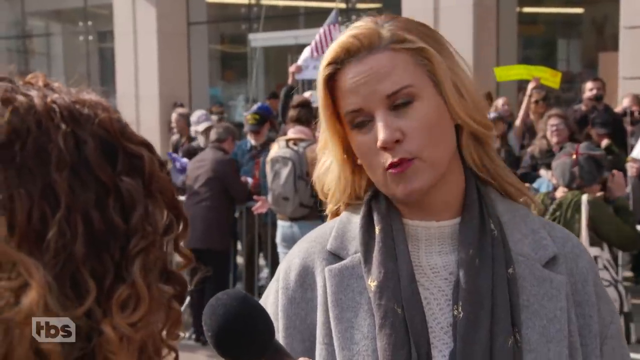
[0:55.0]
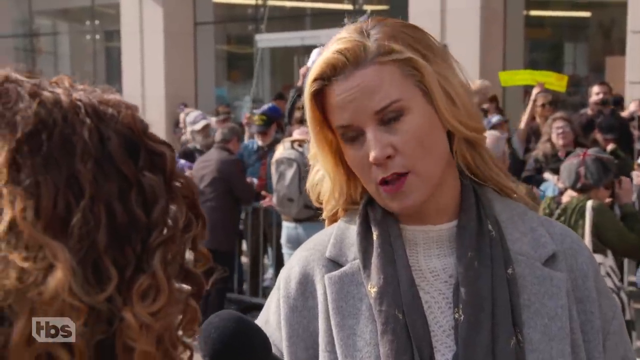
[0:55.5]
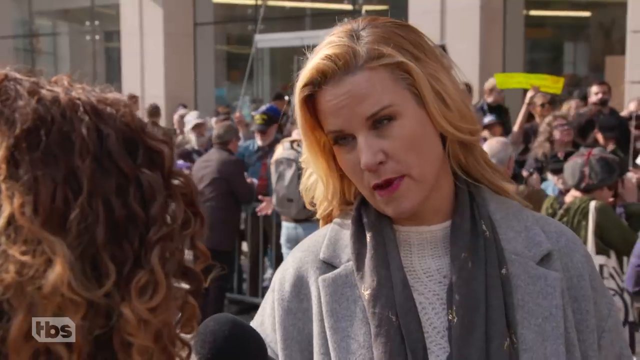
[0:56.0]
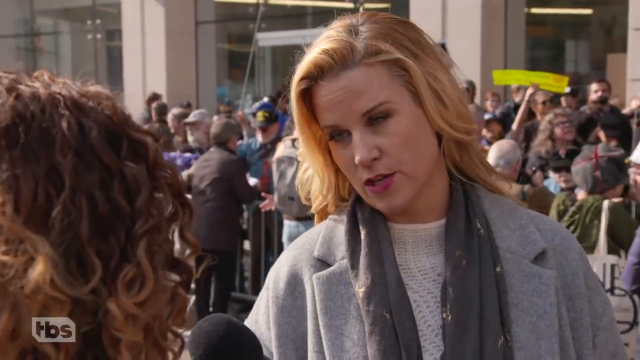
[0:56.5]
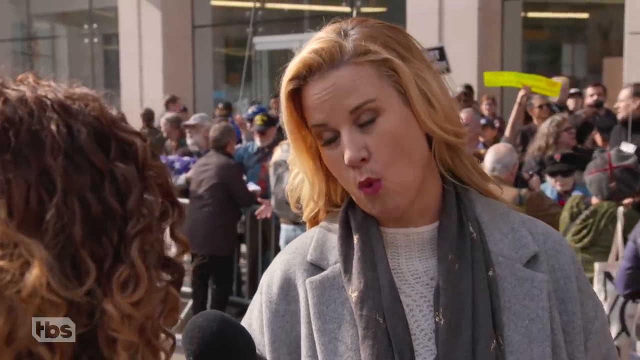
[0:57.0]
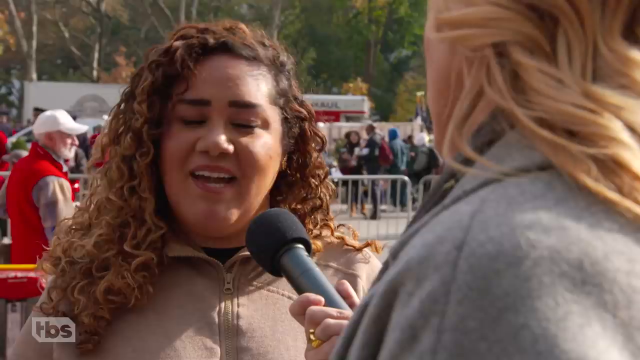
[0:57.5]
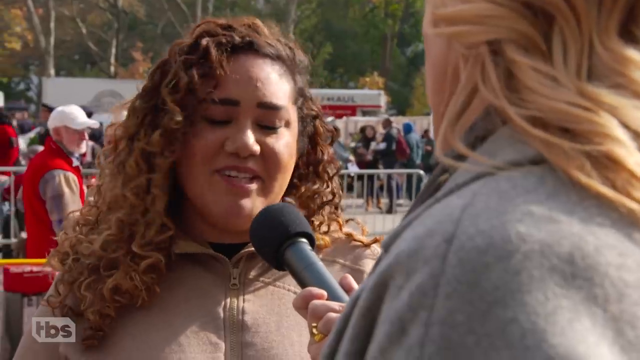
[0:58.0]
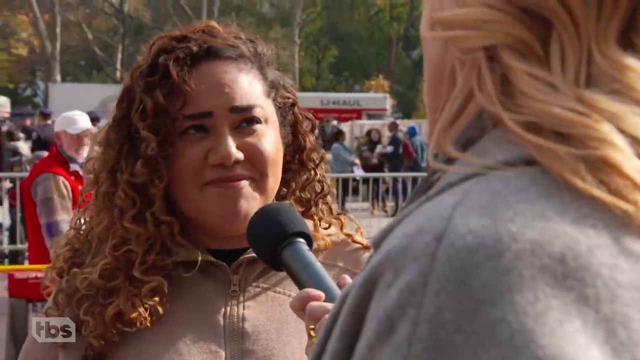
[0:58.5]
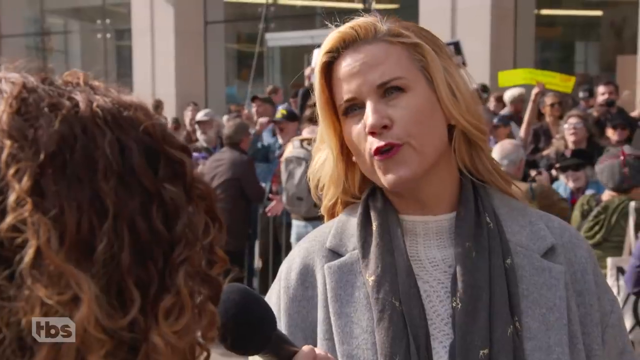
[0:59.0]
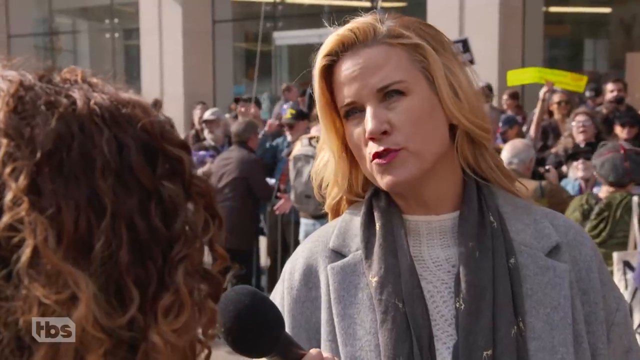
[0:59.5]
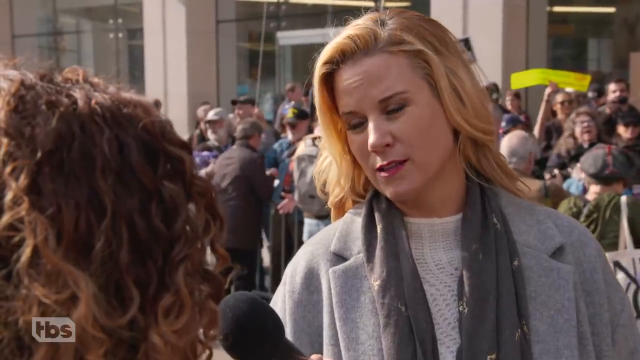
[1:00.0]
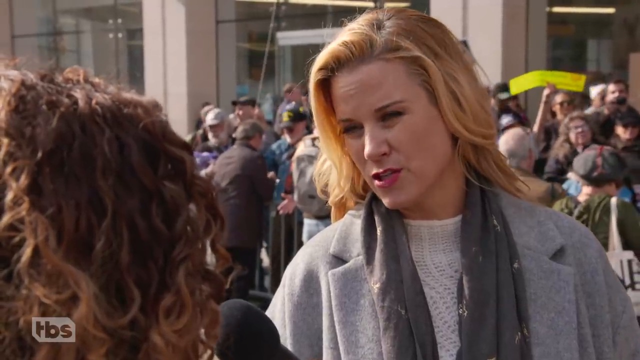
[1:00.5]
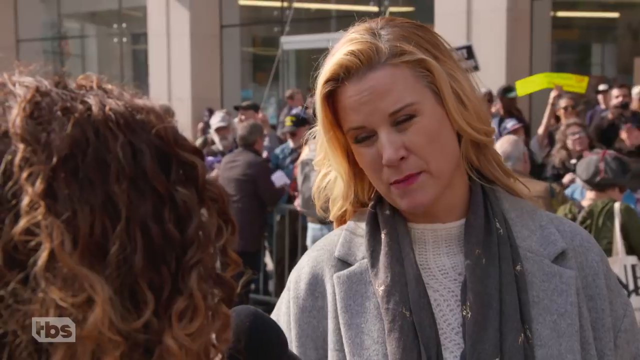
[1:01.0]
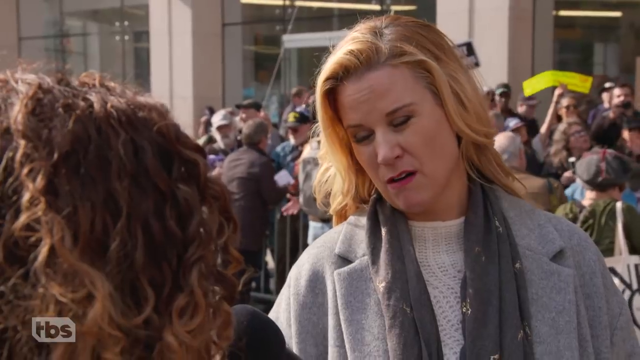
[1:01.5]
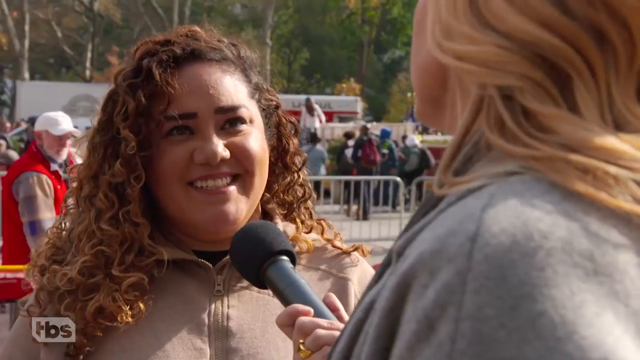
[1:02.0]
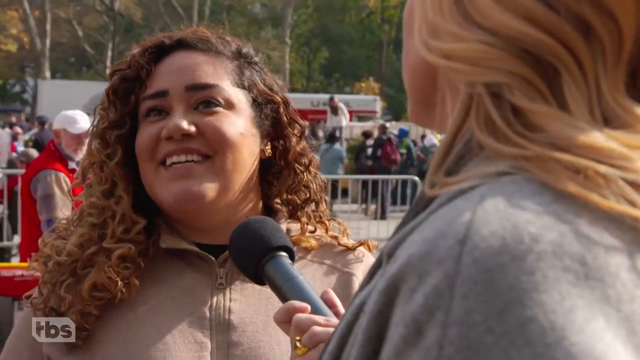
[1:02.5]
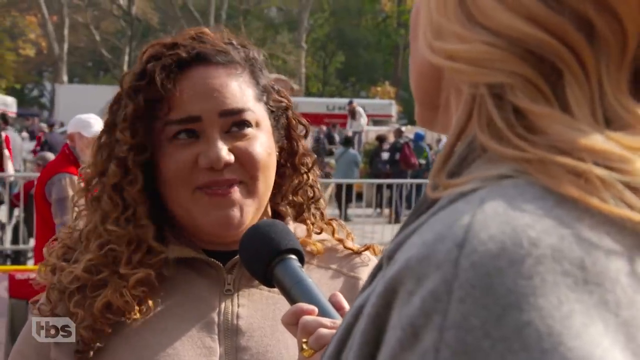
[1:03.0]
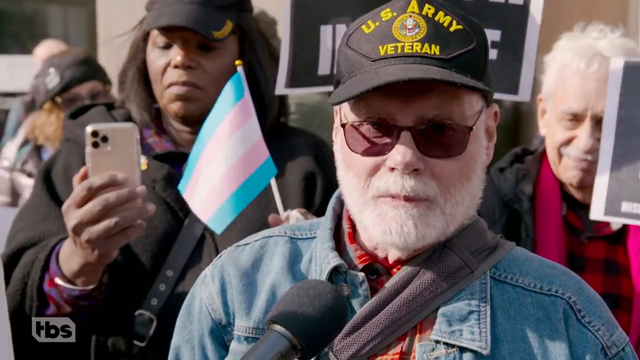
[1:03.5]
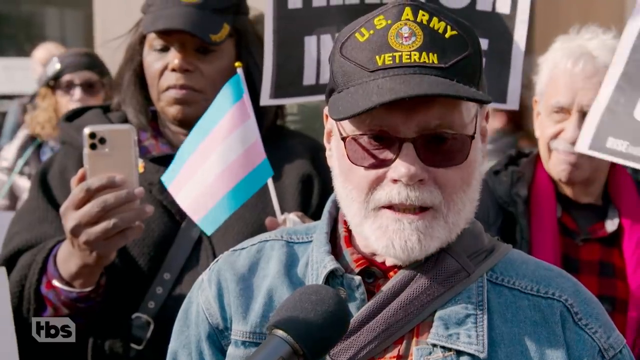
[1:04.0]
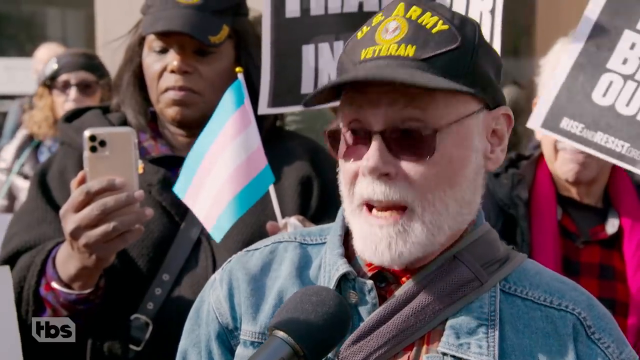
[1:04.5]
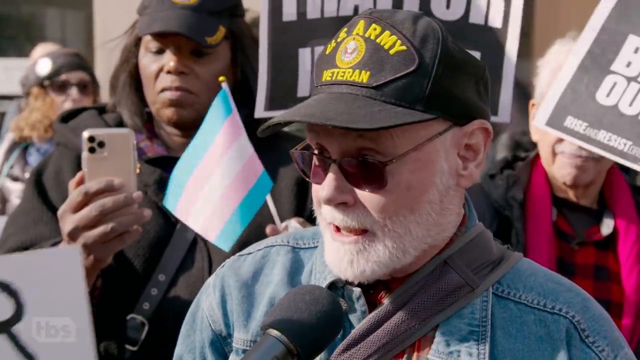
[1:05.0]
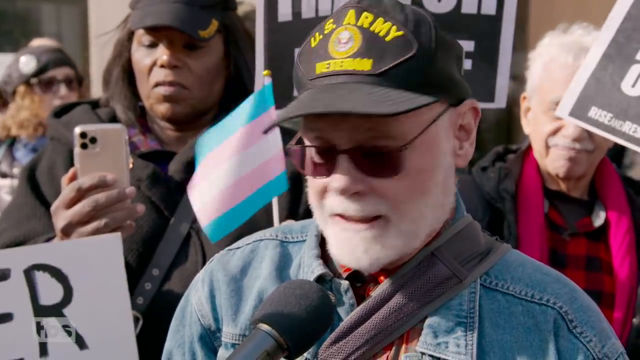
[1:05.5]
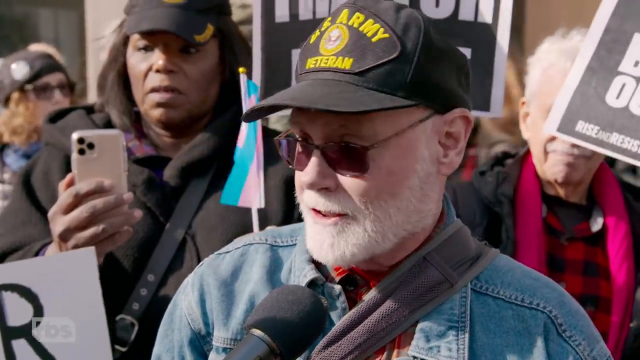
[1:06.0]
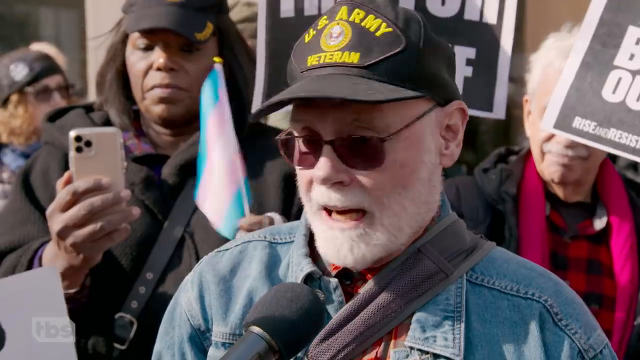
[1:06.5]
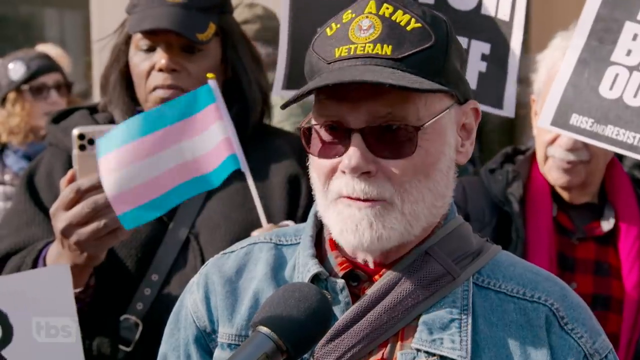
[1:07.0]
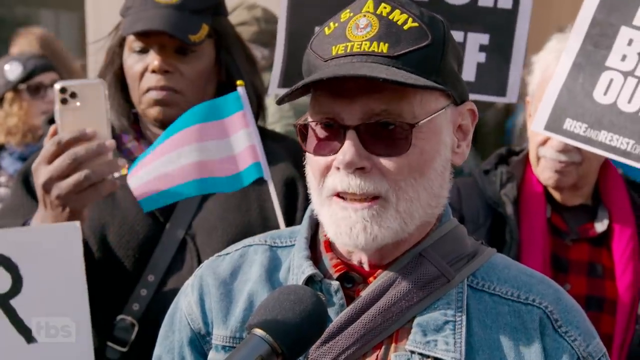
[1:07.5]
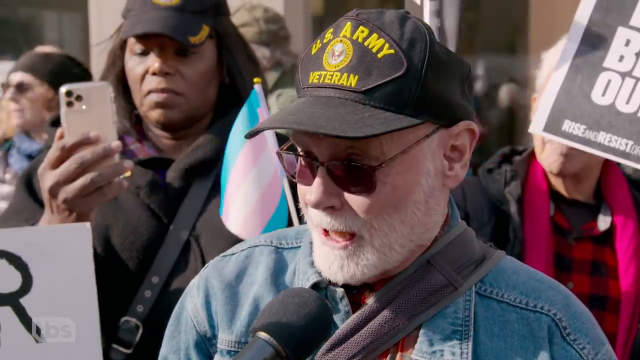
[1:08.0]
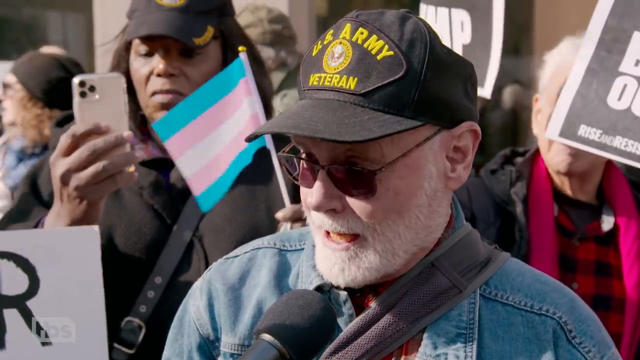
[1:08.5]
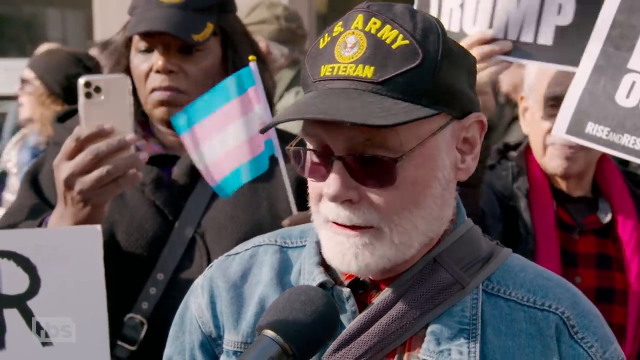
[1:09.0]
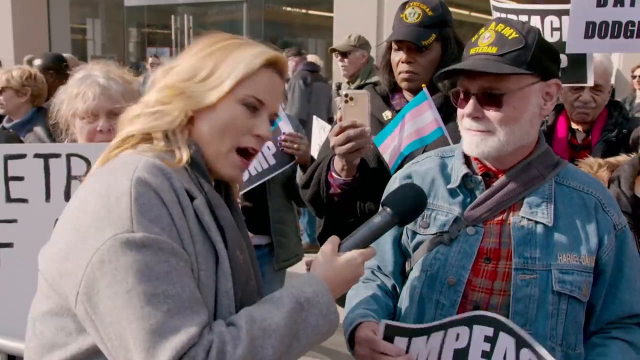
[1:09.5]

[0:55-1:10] The video returns to the interview with Palma. After that, another person is interviewed: an older man with a gray beard, dark sunglasses, and a black ball cap that reads "US Army veteran." He speaks into the microphone and looks very animated. The setting is outdoors, and the background appears to be some sort of protest, with guardrails and people holding signs; more than one sign reads "impeach Trump." The same reporter conducts both interviews.